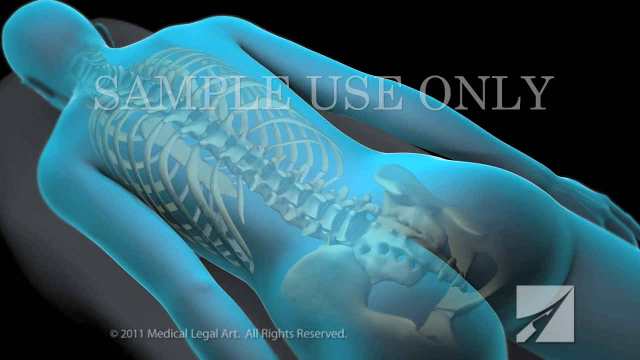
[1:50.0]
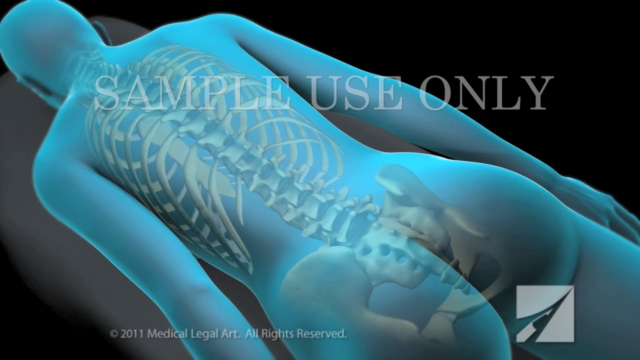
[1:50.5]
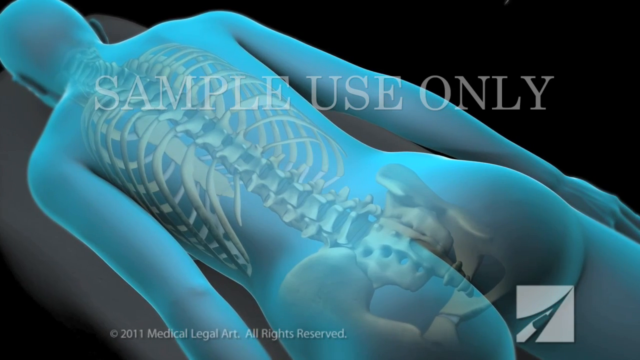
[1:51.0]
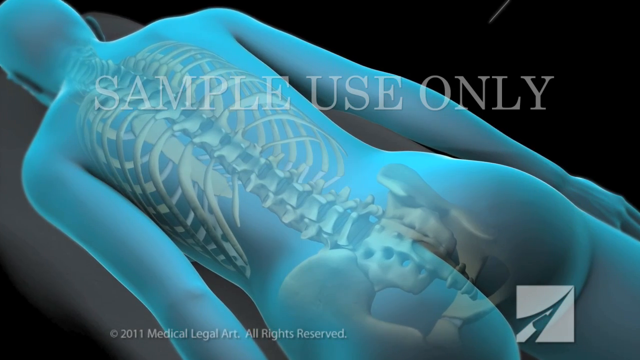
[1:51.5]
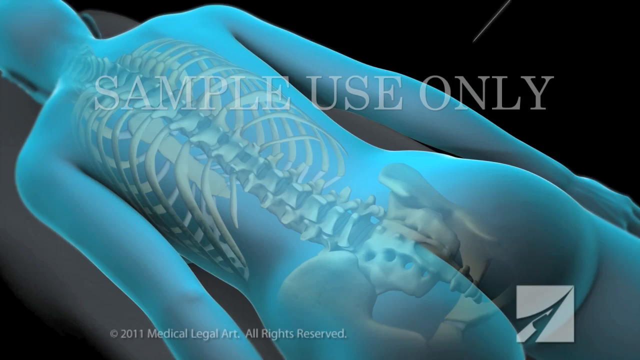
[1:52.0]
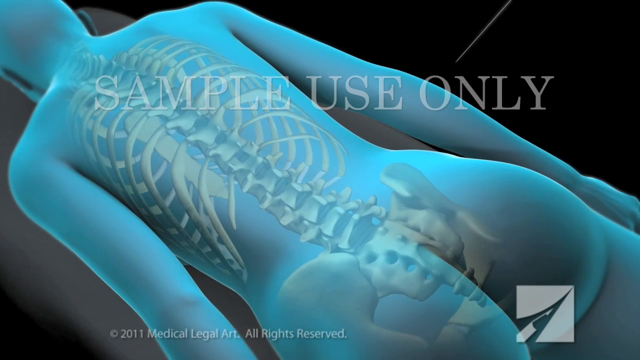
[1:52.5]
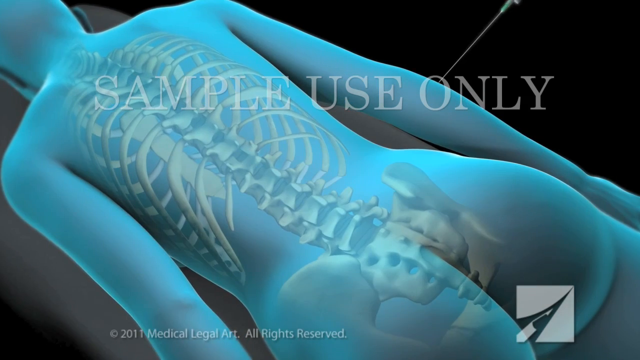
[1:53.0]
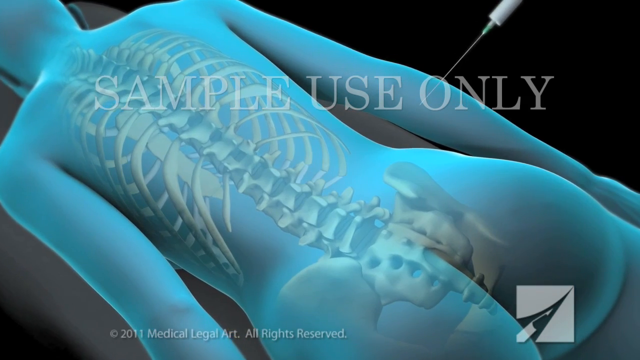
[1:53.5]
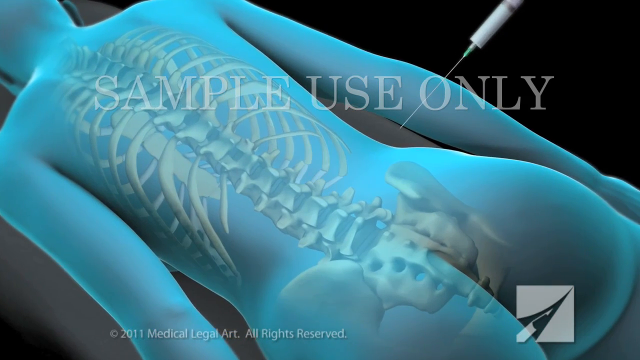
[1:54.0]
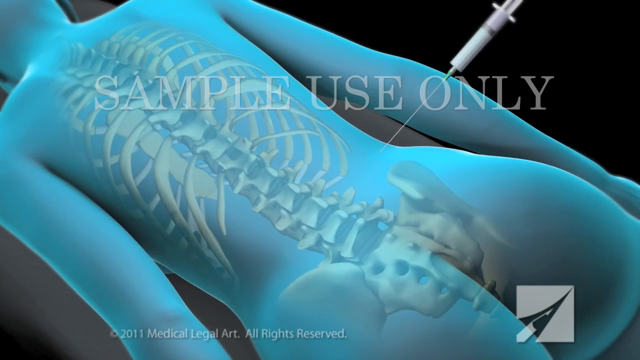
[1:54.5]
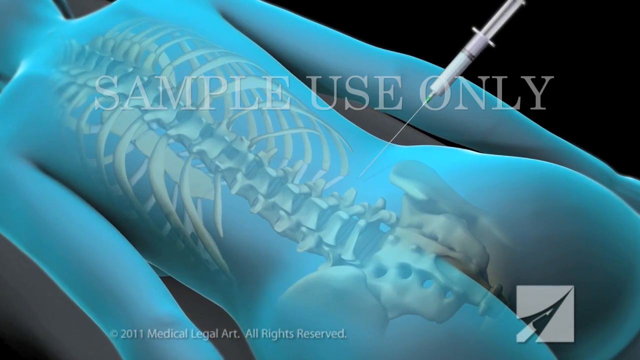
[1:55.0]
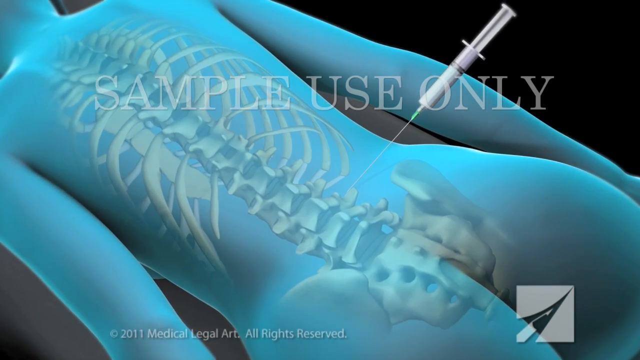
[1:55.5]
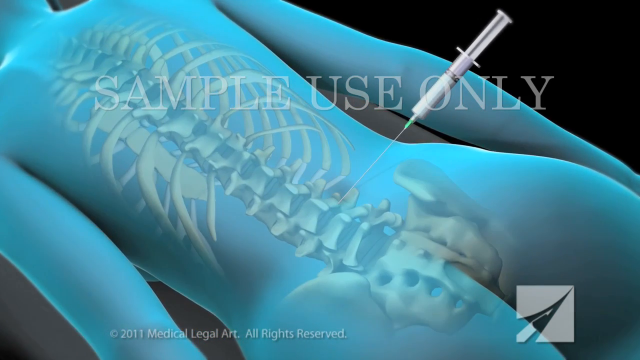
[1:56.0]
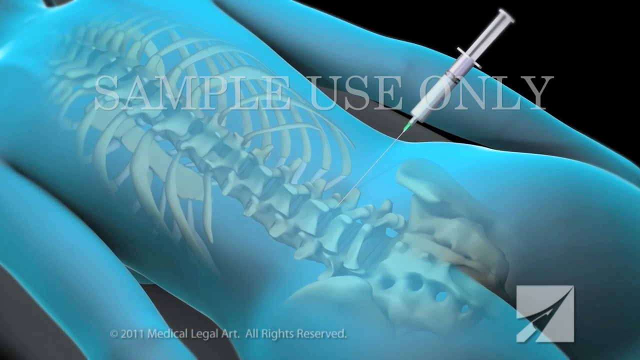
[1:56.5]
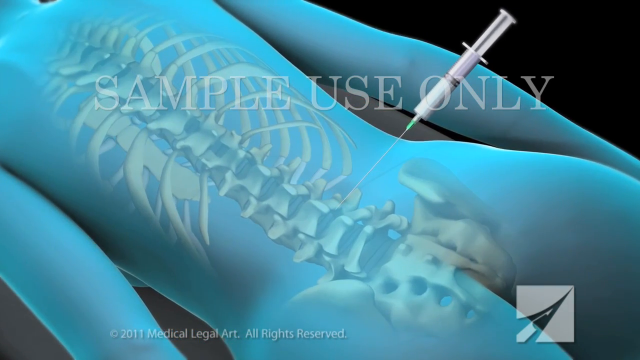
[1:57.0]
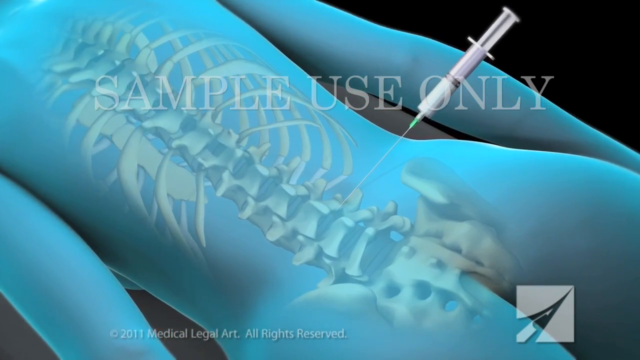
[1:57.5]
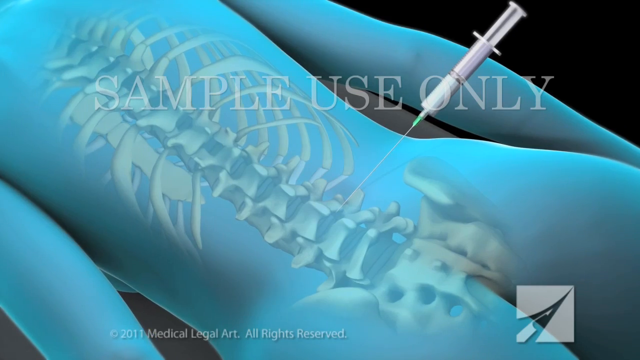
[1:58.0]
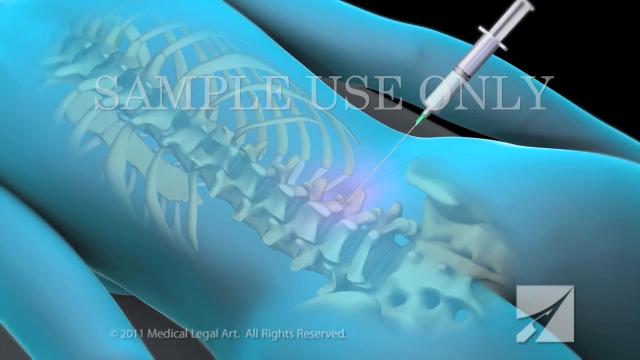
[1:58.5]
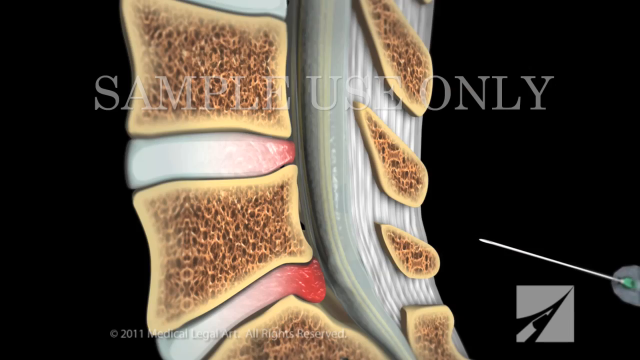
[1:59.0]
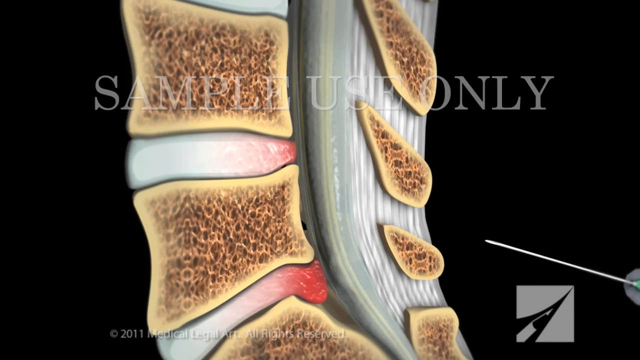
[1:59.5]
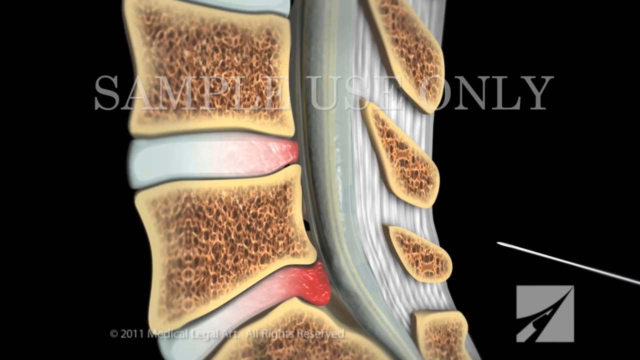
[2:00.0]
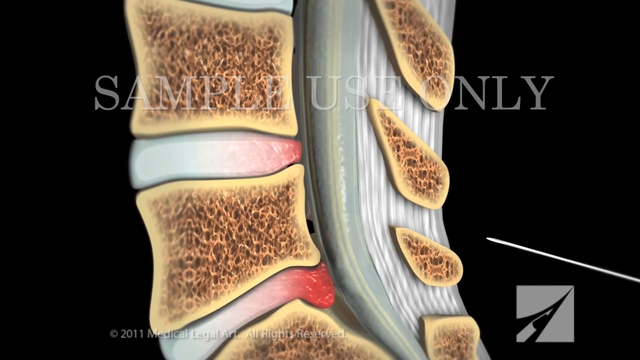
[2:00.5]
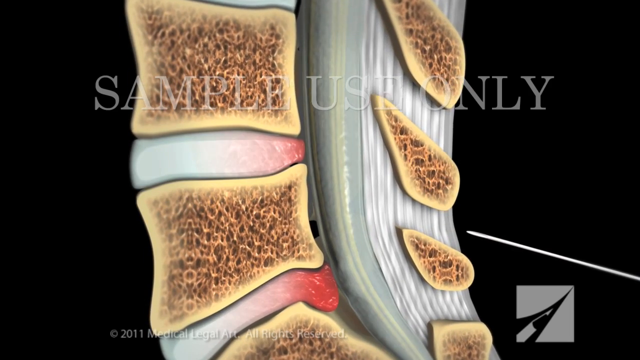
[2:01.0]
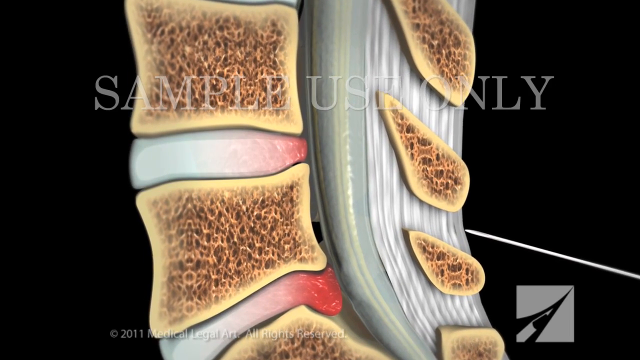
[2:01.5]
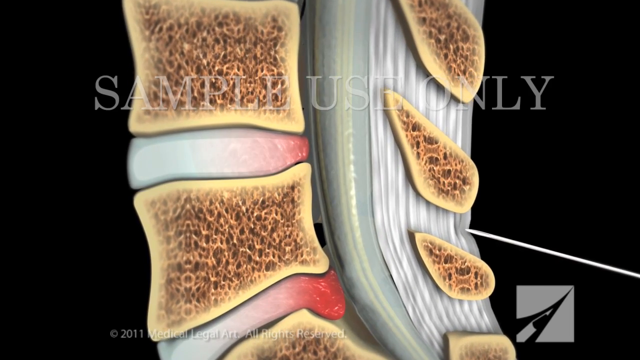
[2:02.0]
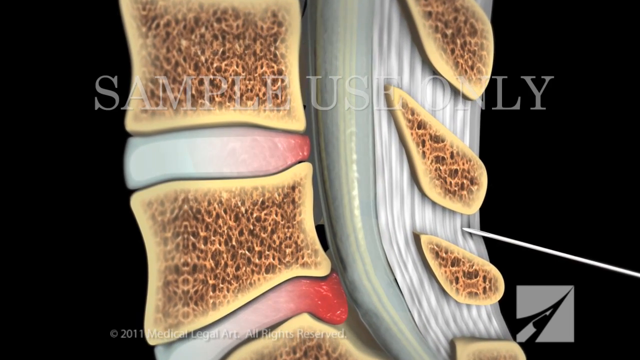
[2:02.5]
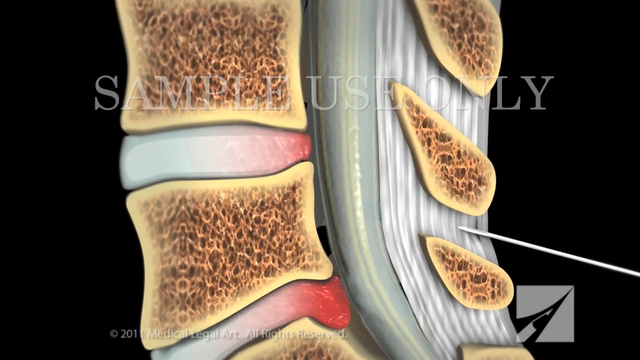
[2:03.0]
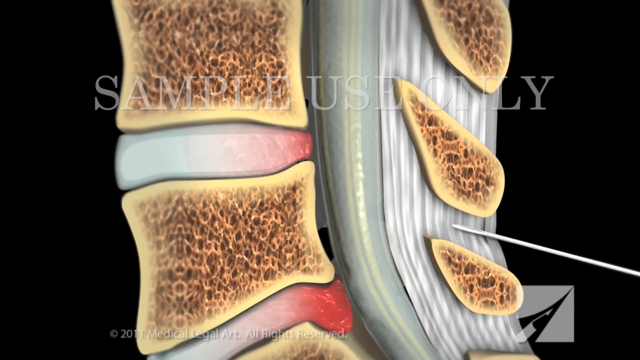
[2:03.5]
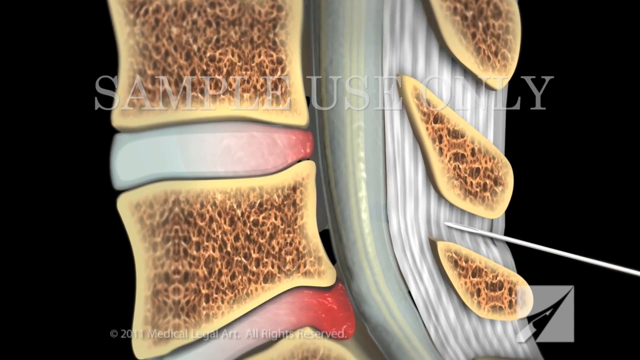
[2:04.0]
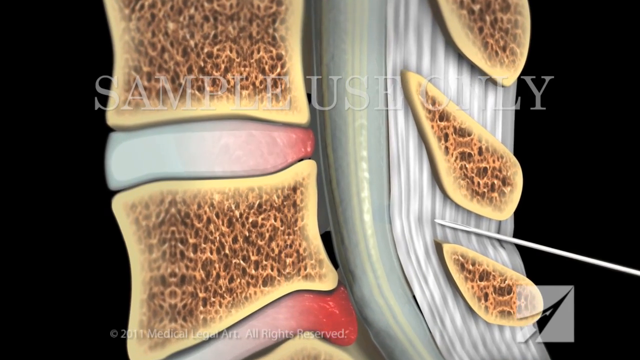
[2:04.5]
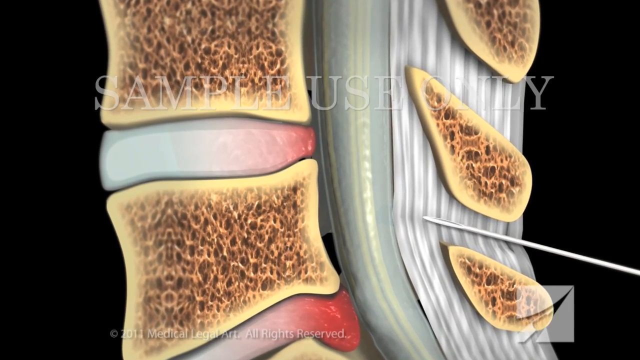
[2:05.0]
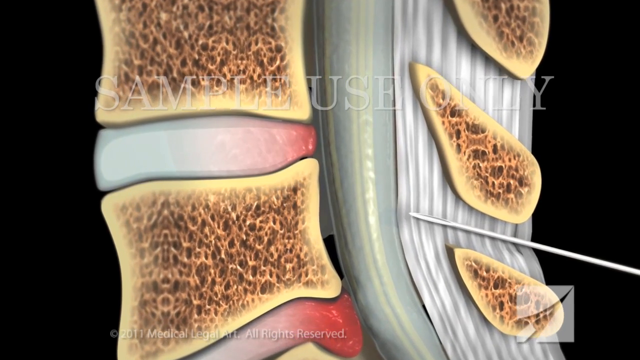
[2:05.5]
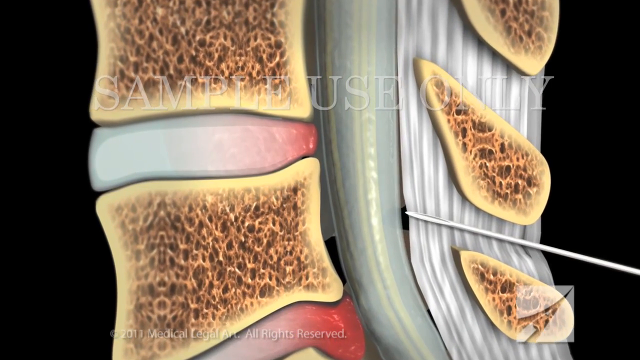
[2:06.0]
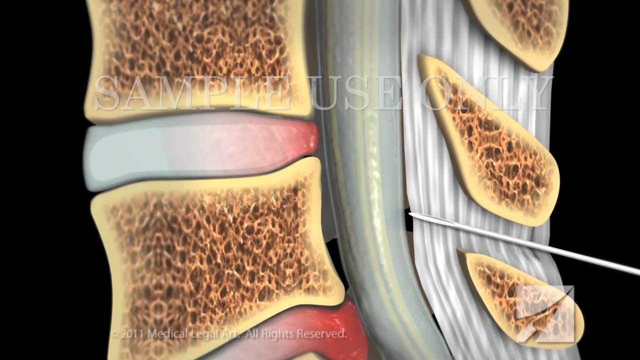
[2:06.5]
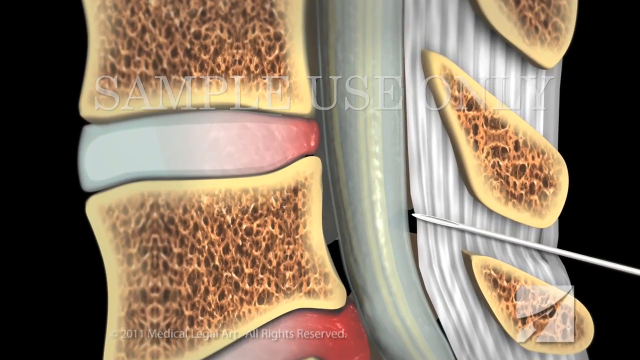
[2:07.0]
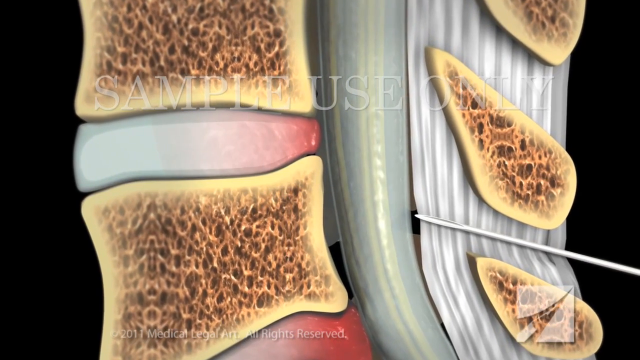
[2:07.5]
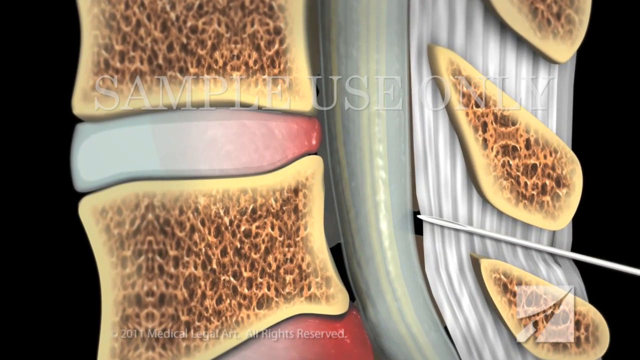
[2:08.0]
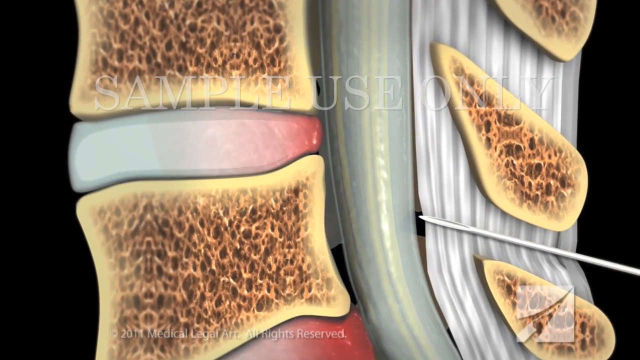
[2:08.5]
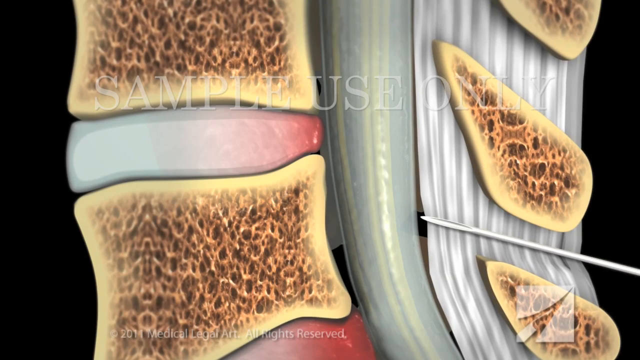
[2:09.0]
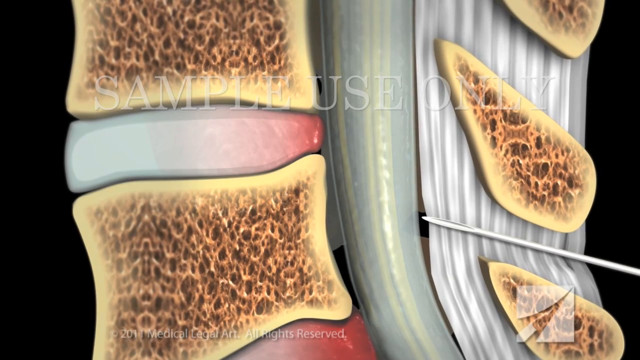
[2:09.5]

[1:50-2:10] A translucent blue outline of a human lies face down on a table, arms at their sides with palms down. The skeletal system is visible inside the translucent body from the lower buttocks up to the top of the head, mainly the ribcage and spine. The table is gray and the background is black, with a light gray watermark reading "sample use only" across the top center. The view pans in toward the spine, and a white syringe comes in from the upper right corner with a long, thin white needle pointing to the lower vertebrae just above the rear. As the view continues to pan in, the spot where the needle goes into the skin between the vertebrae turns pink. The view then pans to a side image of the vertebrae and insulating tissue: the vertebrae are off-white and spongy with brown and yellow insides, and the insulating tissue between them is primarily white but red at the pain spots. At the bottom right, a white needle comes in toward the spinal tissue, entering through the skin and coming directly to the vertical nerves connected to the vertebrae. The image then returns to the person lying on the table.